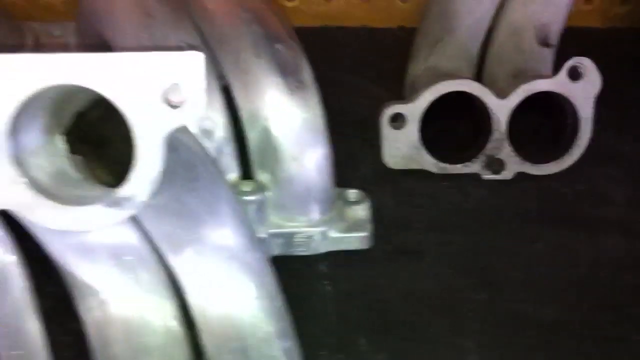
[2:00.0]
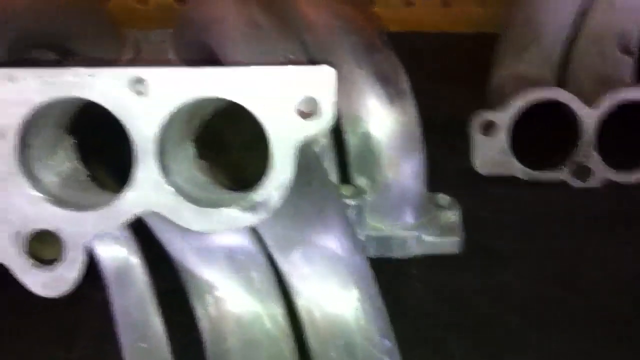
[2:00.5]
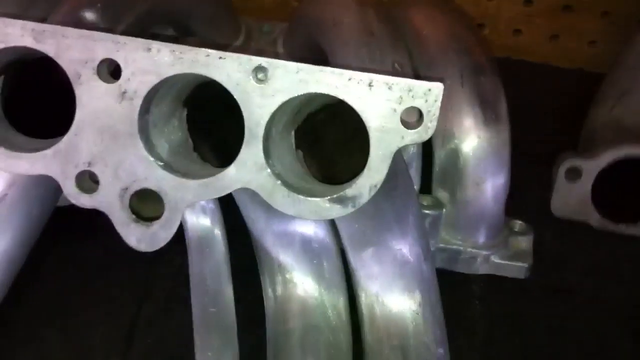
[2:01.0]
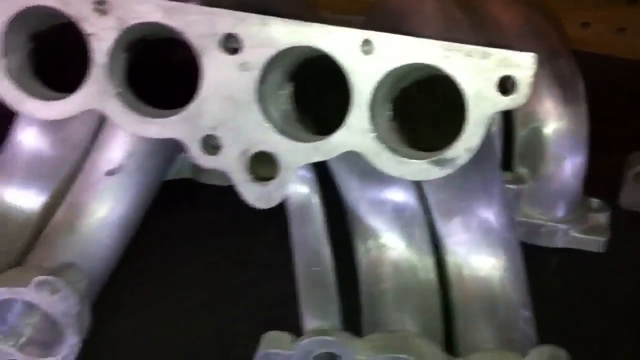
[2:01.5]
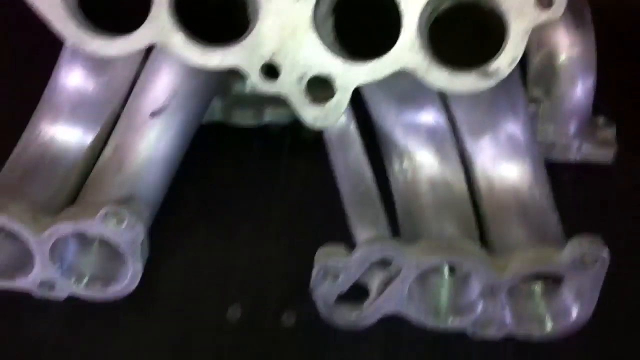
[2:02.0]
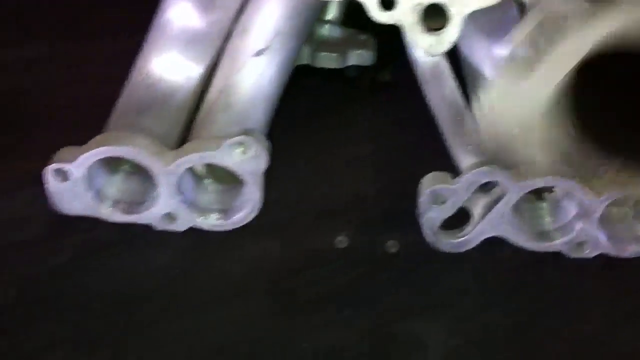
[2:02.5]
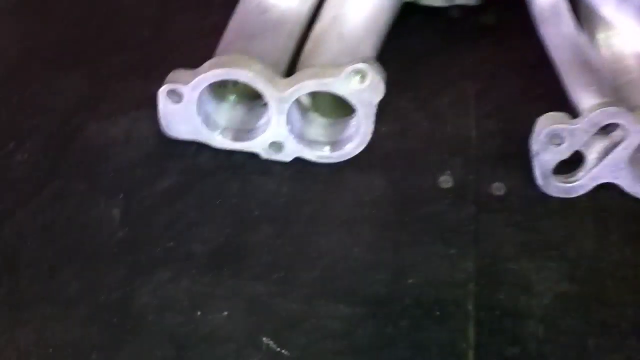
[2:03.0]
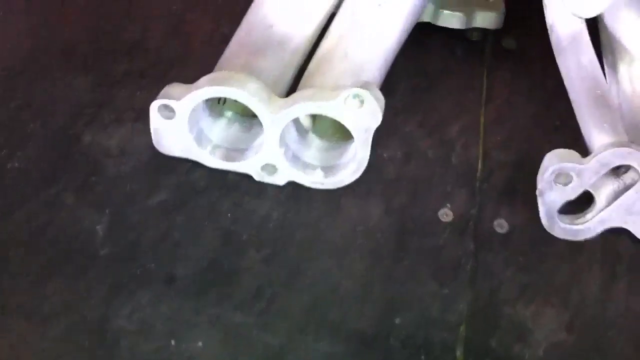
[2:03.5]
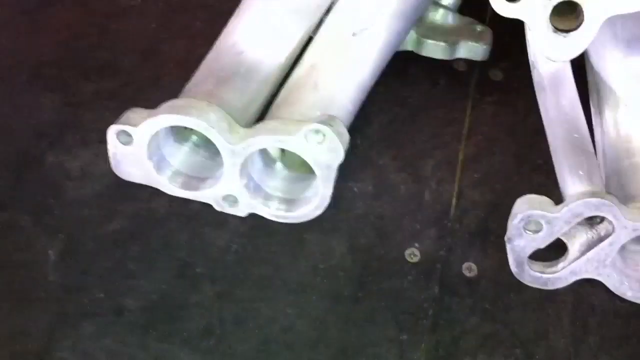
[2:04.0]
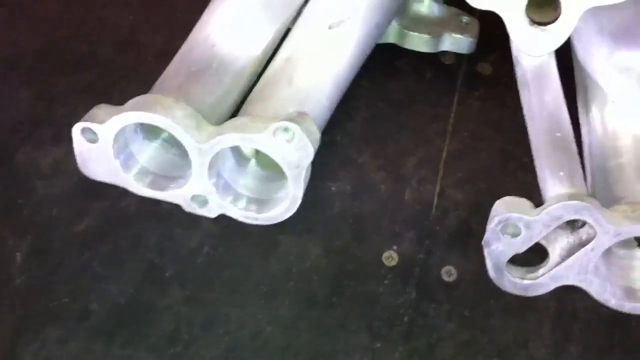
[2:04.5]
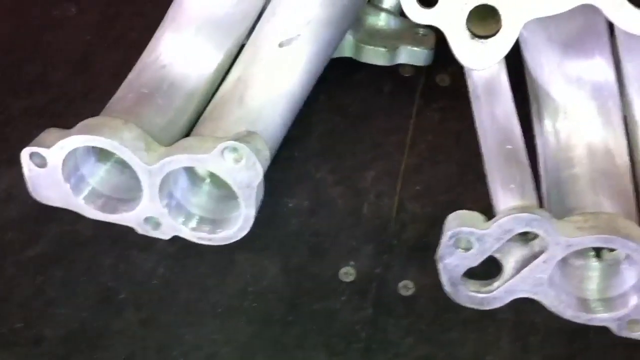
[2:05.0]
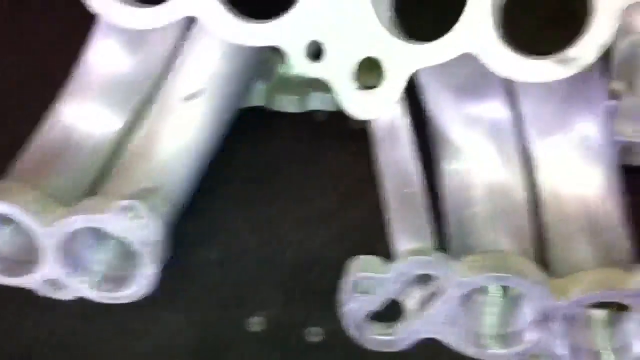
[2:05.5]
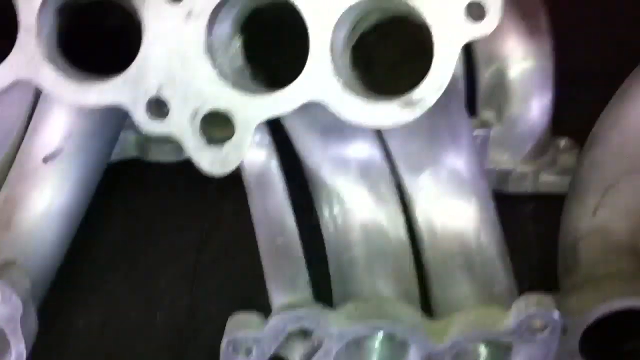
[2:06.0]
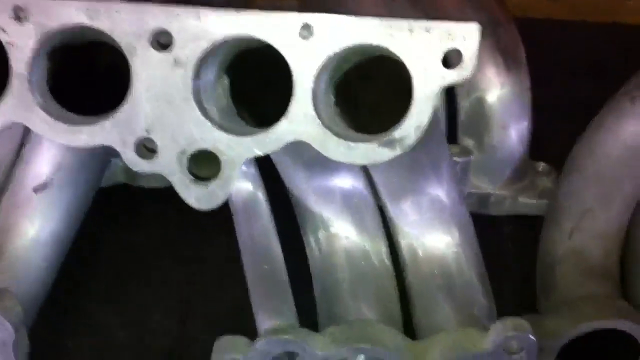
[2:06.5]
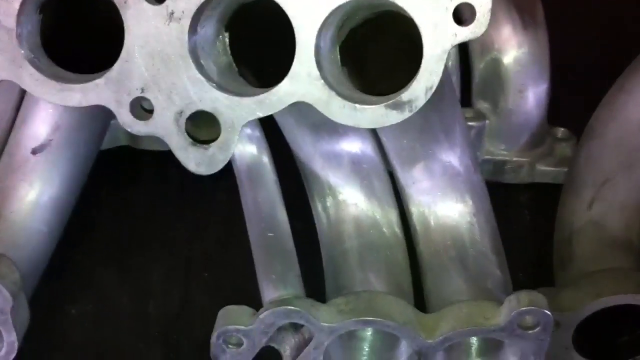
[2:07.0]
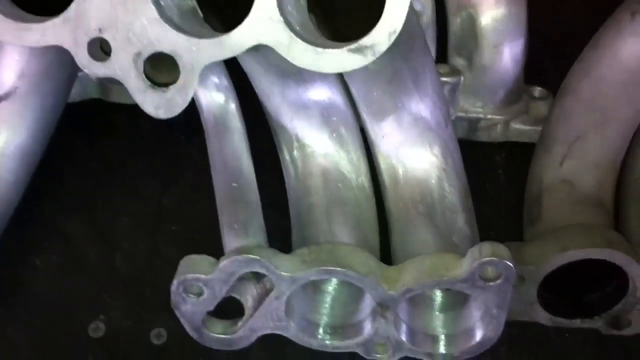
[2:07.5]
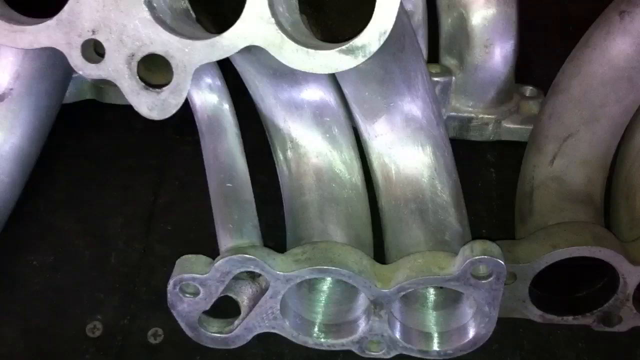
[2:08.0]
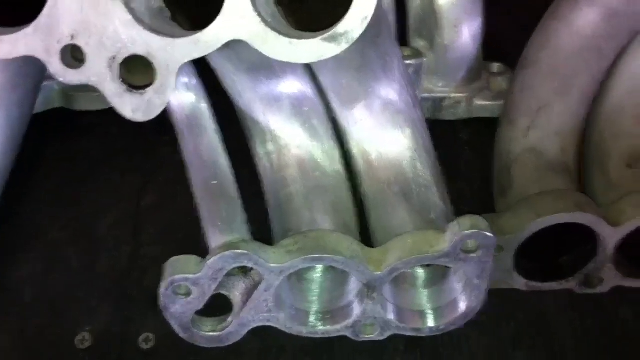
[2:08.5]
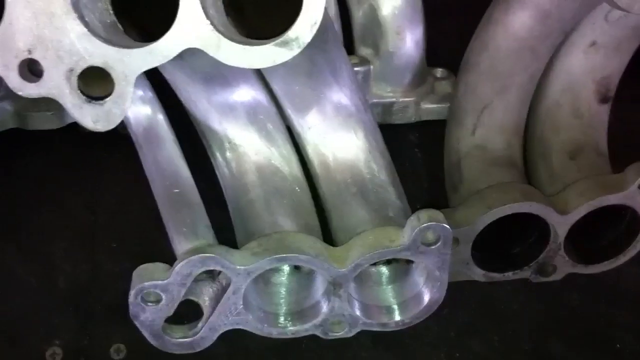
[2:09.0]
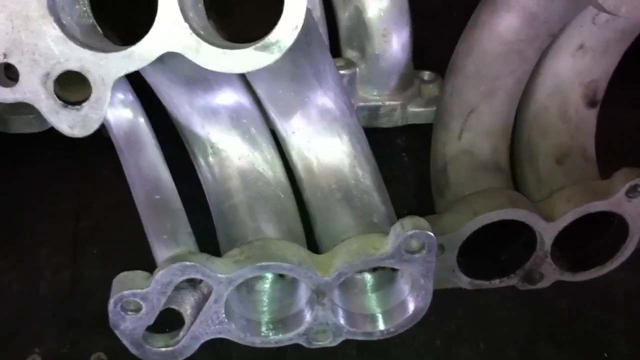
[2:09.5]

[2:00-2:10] Plates with four holes each are attached to metal pipes, and the other end of the pipes also has plates attached. The plates on the left side have been cleaned or had their insides redone; they are very shiny inside at both ends, with a metal pipe in between. Two screws on the outside of the first pipes are very shiny, and the metal on the outside has been shined as well. The pipes on the right side look like they have not been cleaned yet: they are very dirty, with smudge marks on the outside and plates connecting them, and inside they are very dark and dirty and look like they have not been resurfaced at all like the first ones.